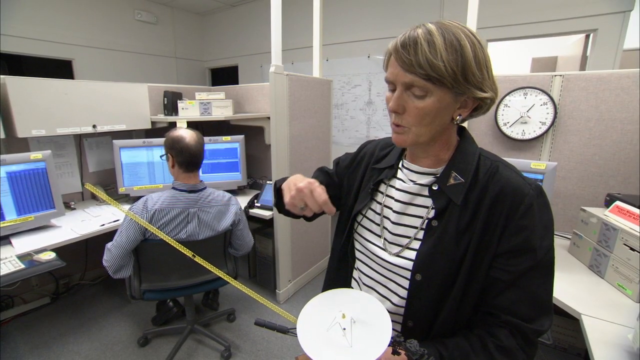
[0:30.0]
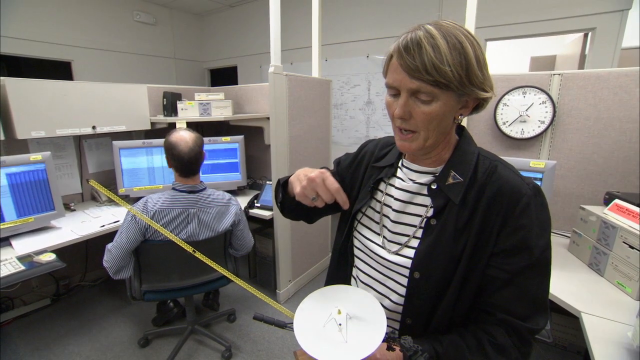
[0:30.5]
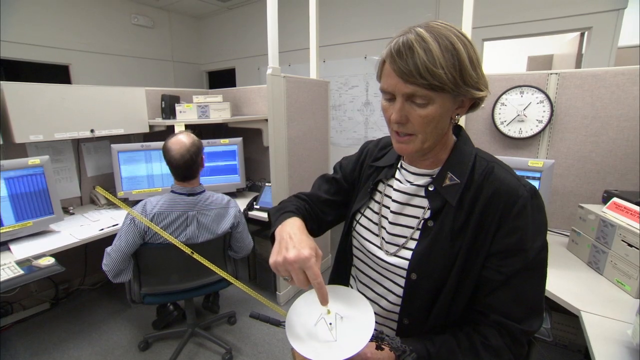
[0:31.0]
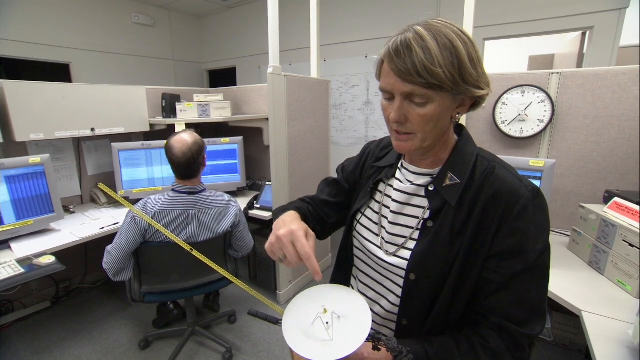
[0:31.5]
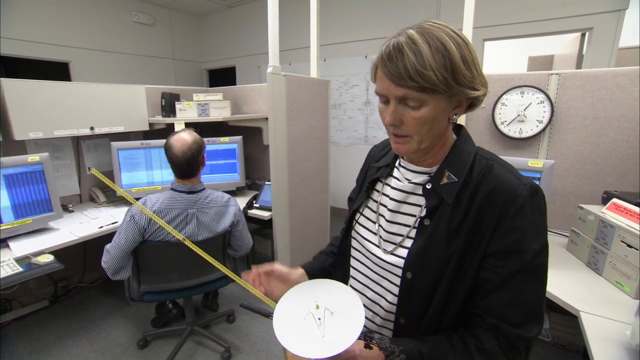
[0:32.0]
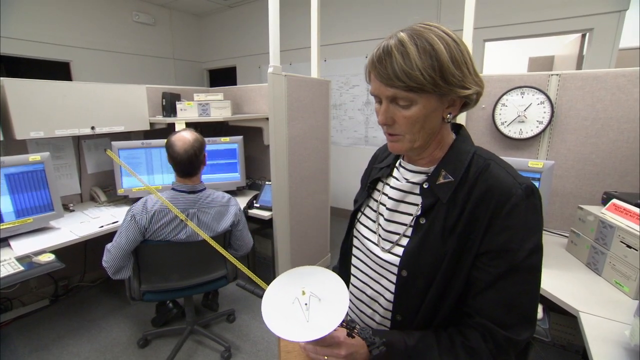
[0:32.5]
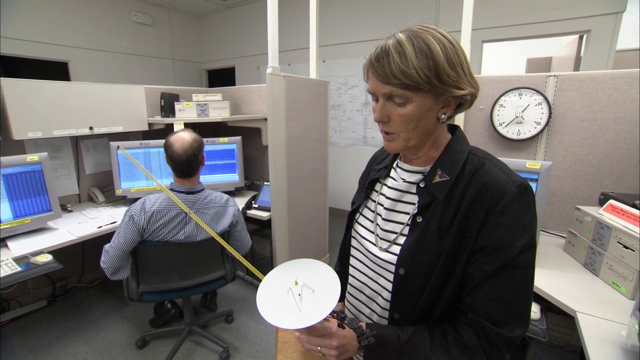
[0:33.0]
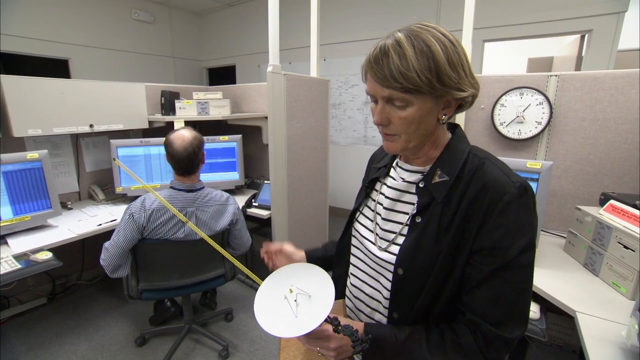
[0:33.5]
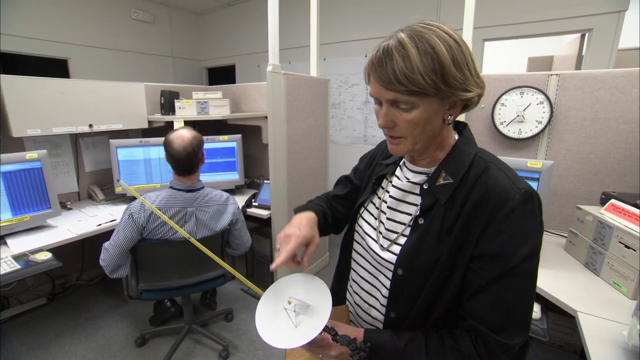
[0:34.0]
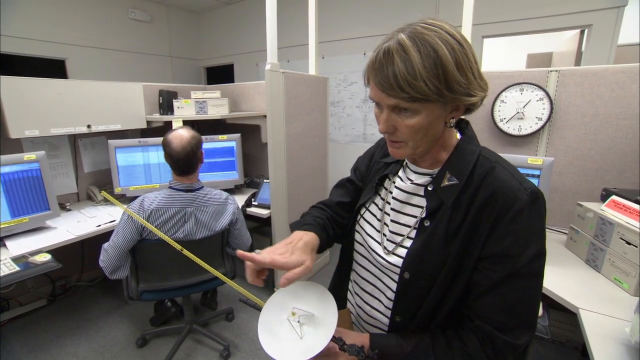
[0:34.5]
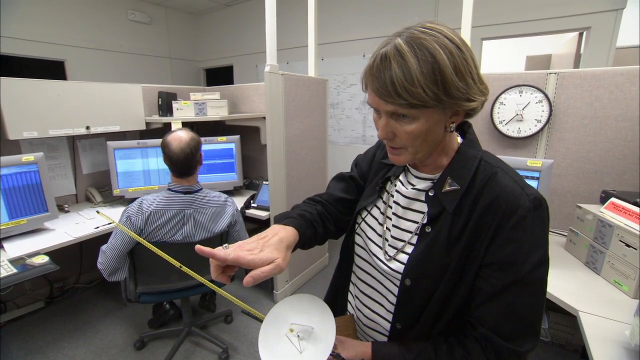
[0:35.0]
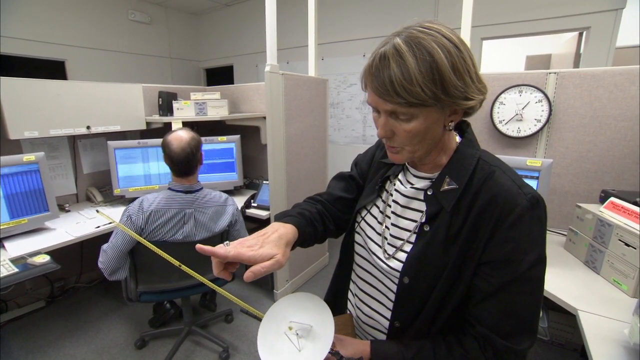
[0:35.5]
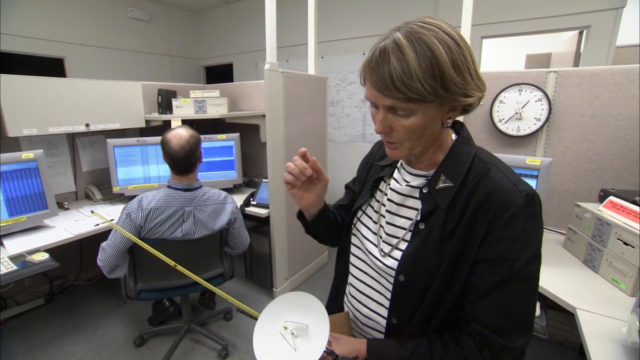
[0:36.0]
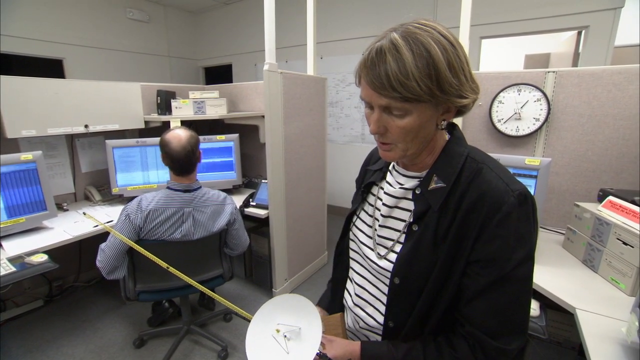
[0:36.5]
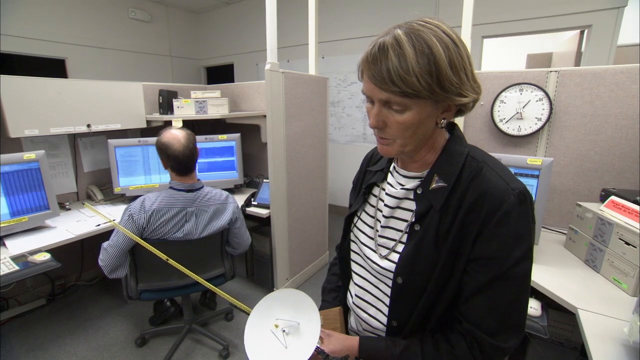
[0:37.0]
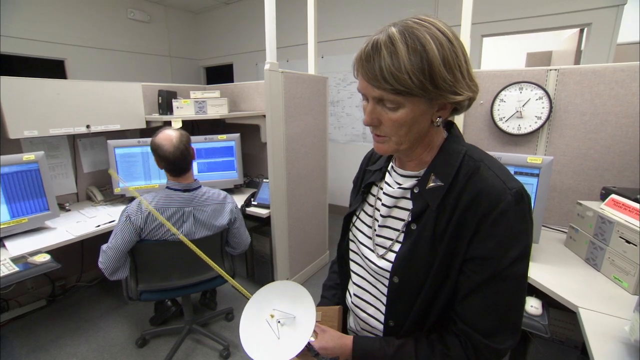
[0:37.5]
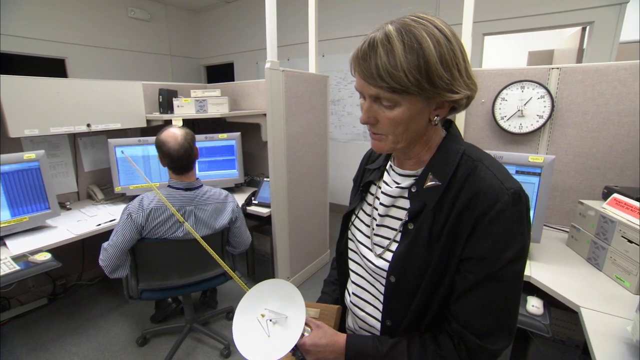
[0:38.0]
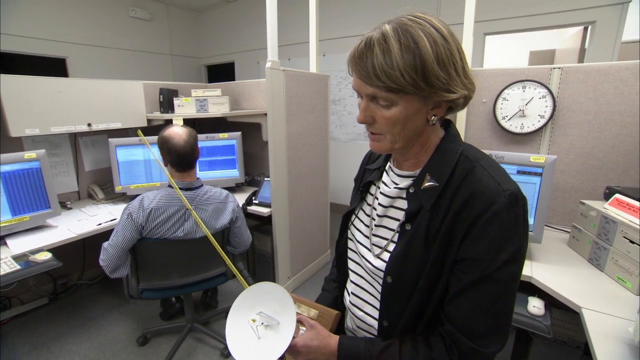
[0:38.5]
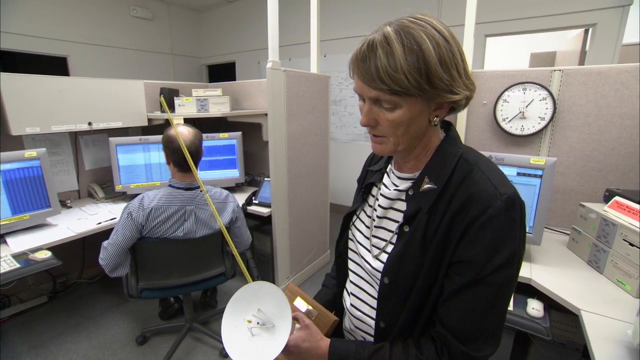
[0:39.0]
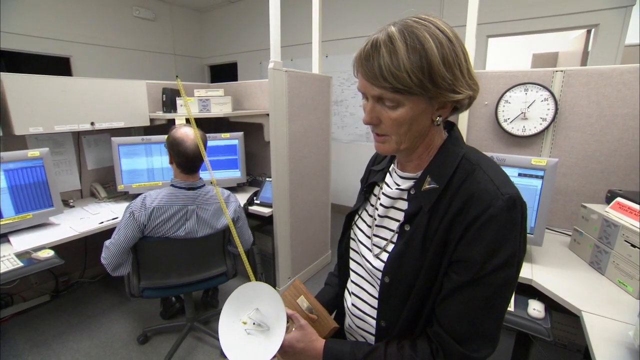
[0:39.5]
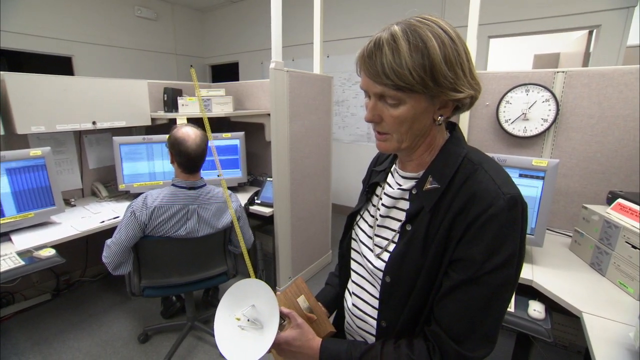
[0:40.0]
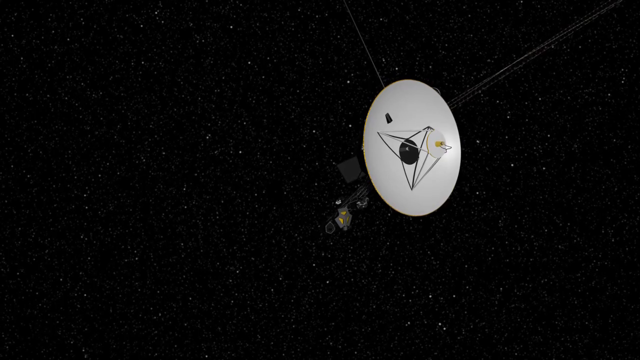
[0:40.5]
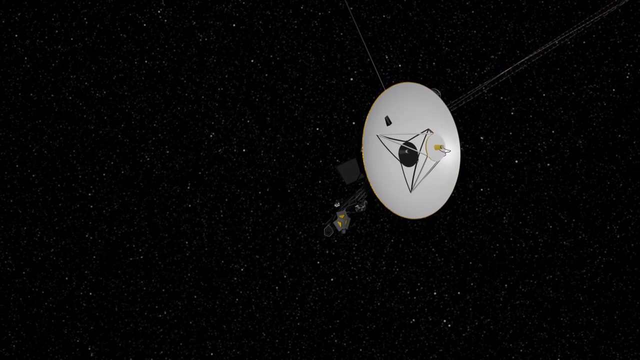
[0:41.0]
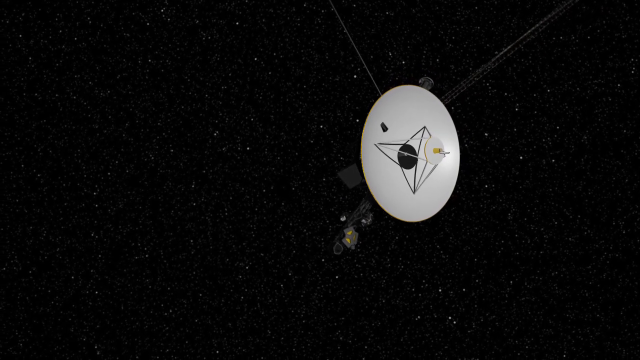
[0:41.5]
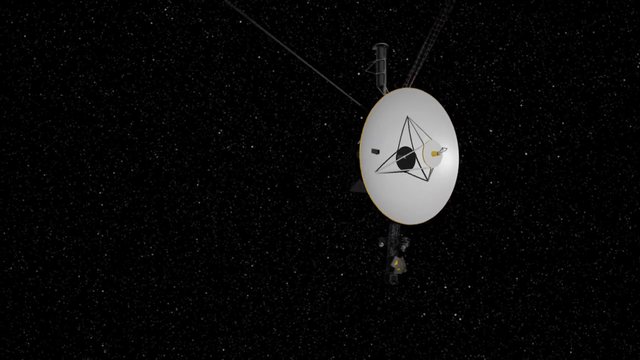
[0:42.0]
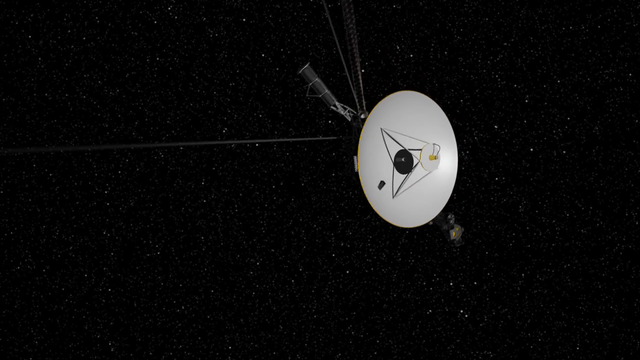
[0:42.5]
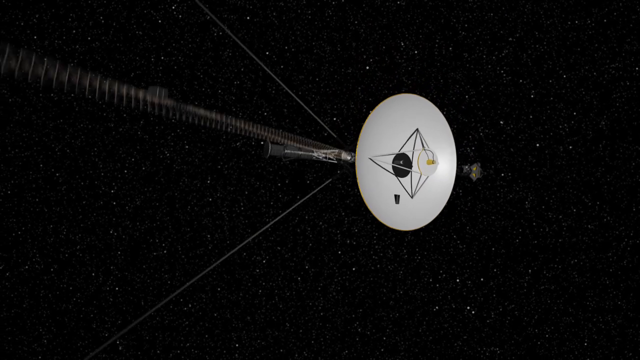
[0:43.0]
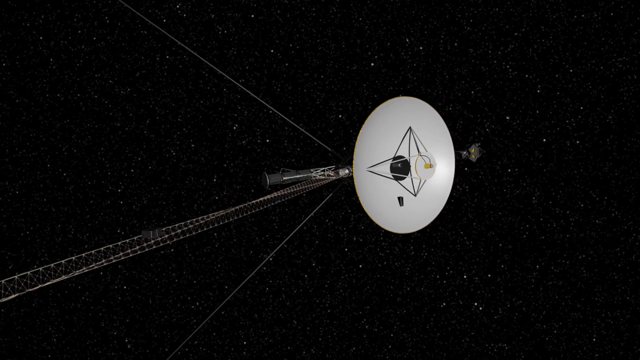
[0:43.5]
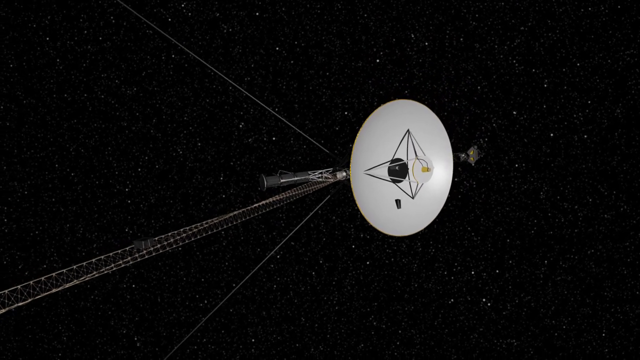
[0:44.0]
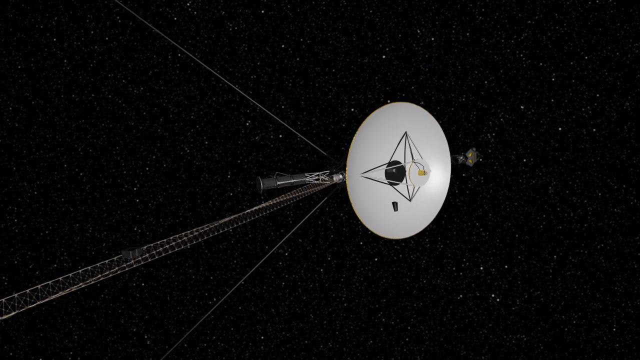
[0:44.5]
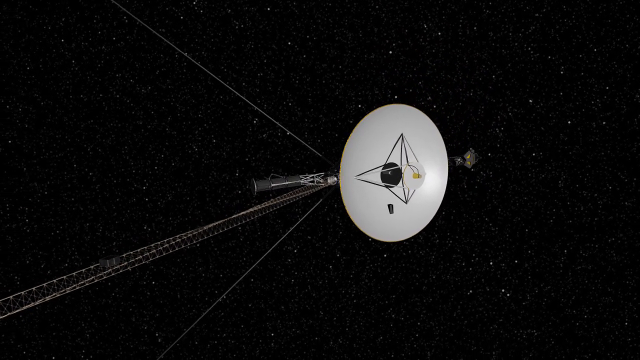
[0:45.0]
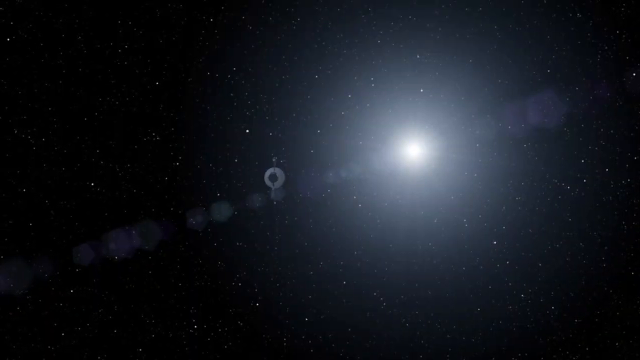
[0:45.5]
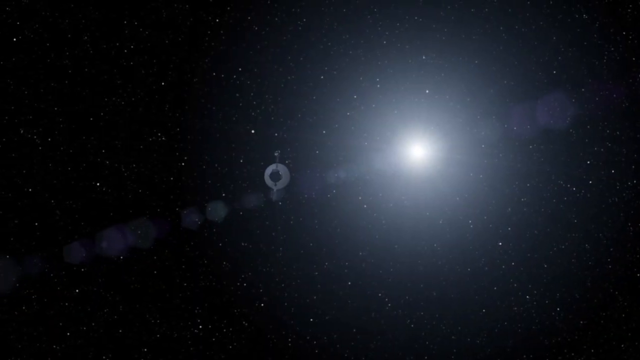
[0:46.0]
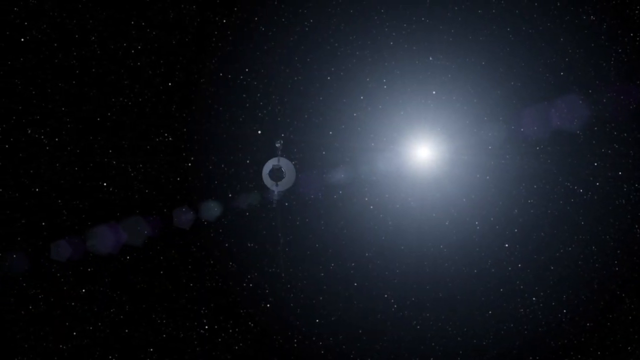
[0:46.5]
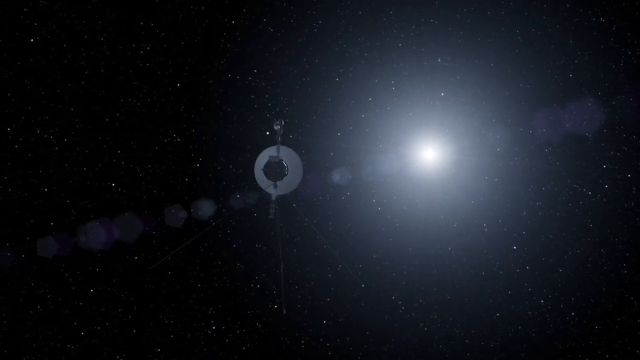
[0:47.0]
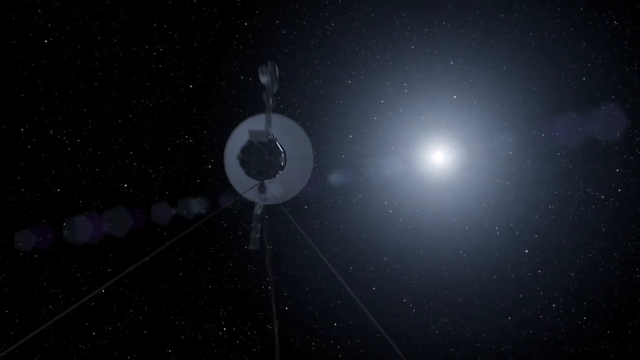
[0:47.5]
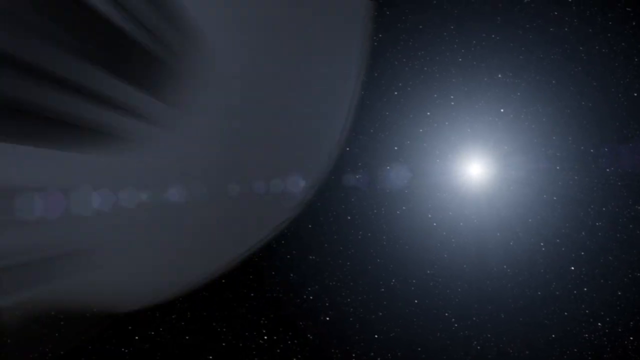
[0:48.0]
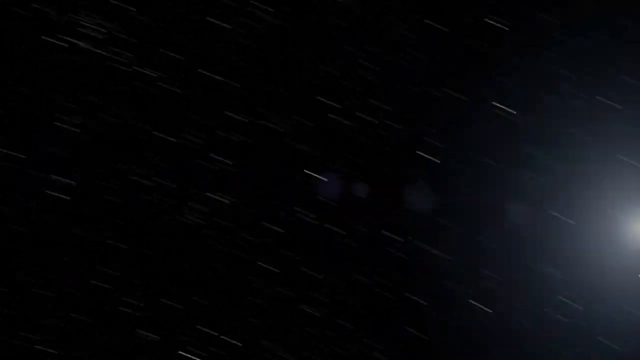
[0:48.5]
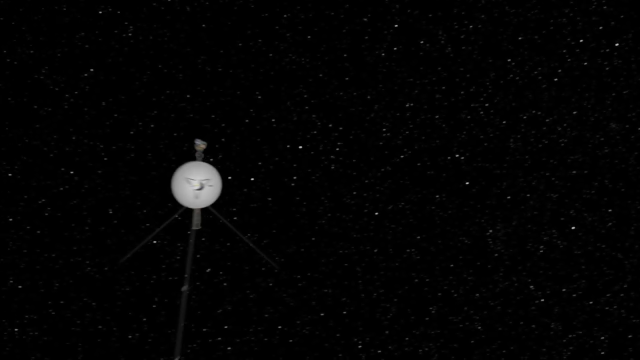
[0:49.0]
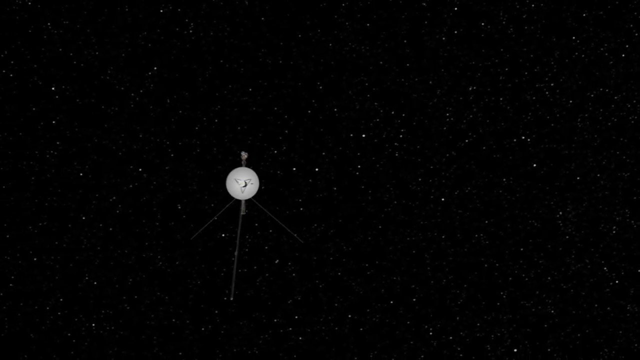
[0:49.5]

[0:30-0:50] A woman points and gestures to a circular device that seems to be a model or replica of a Voyager space satellite. In her other hand she has a yellow tape measure next to the satellite, though it may just be part of the satellite. She wears a black overcoat, a white shirt with black stripes and a silver necklace. One scene shows a 3D representation of the Voyager satellite in space, with space shown as a vast expanse of stars that are very small white circular dots. The 3D model is shown, as is the space office where they work.